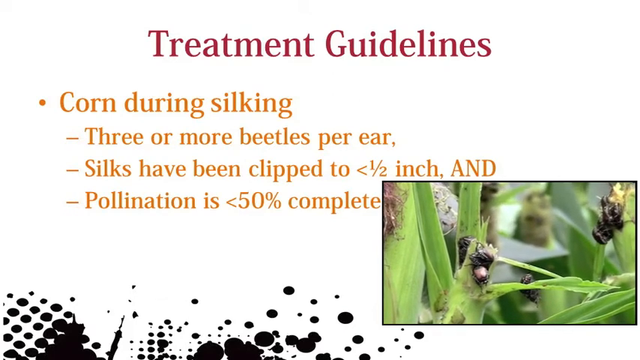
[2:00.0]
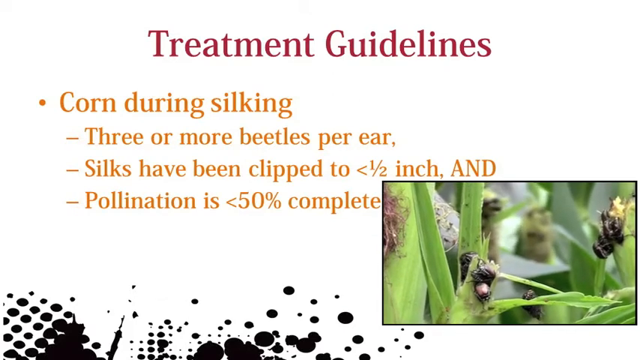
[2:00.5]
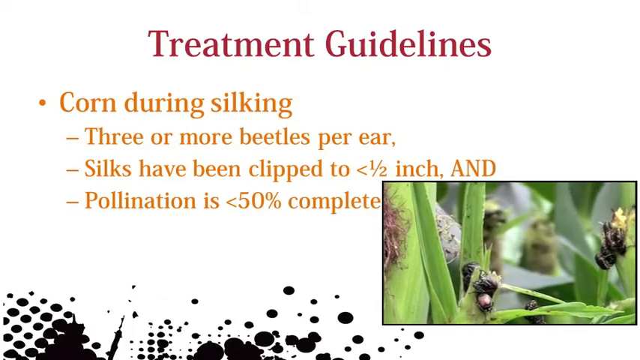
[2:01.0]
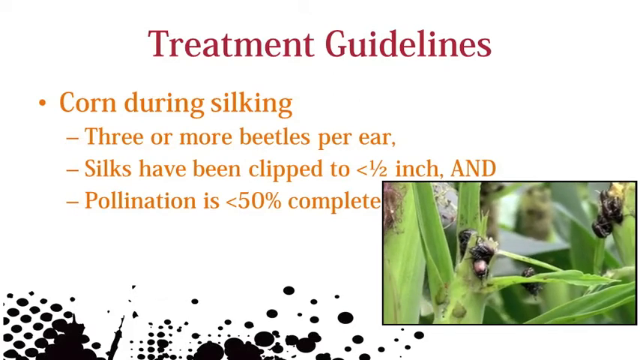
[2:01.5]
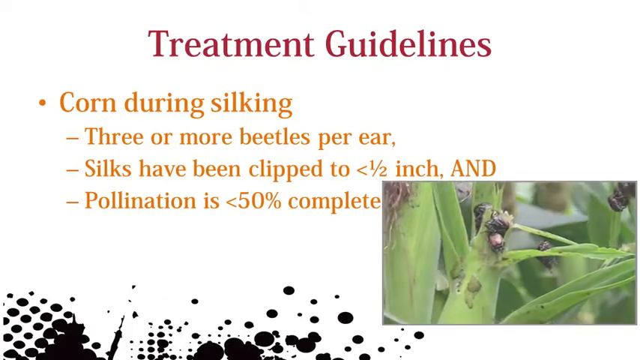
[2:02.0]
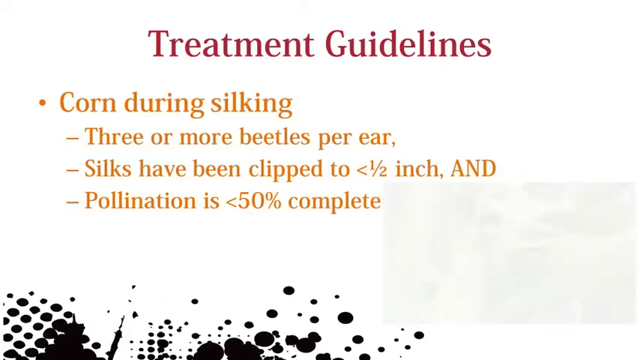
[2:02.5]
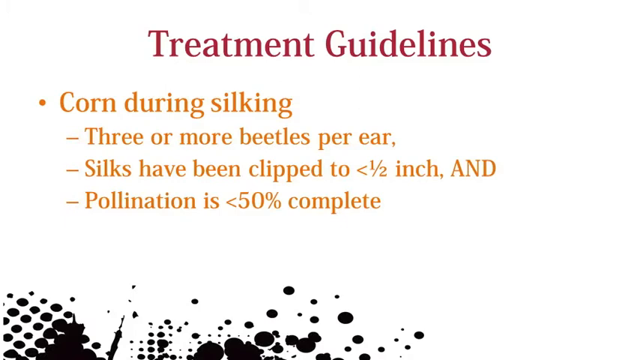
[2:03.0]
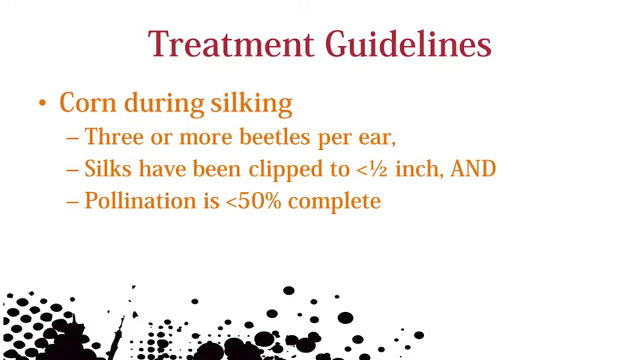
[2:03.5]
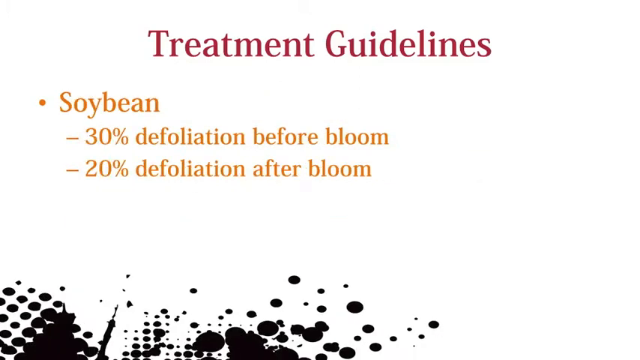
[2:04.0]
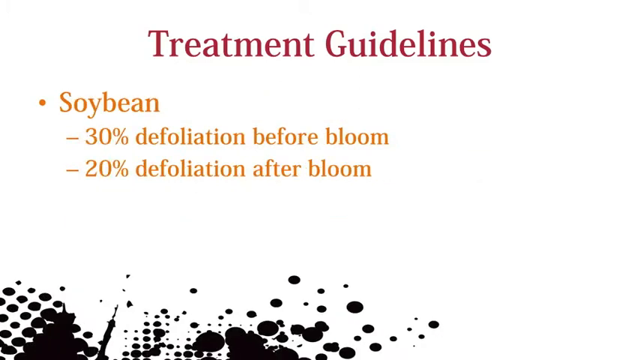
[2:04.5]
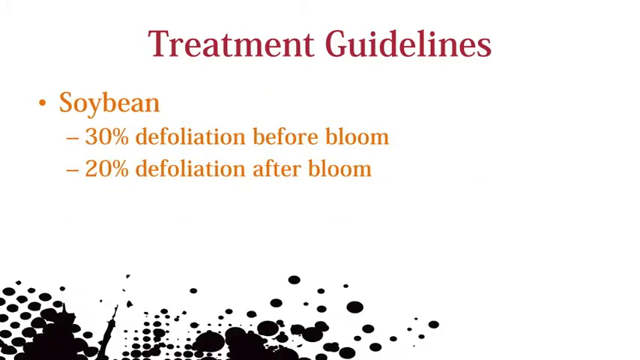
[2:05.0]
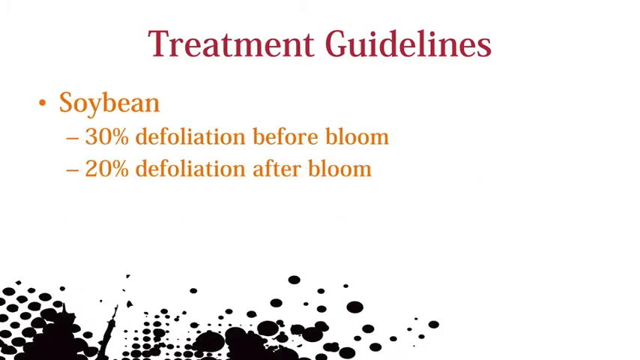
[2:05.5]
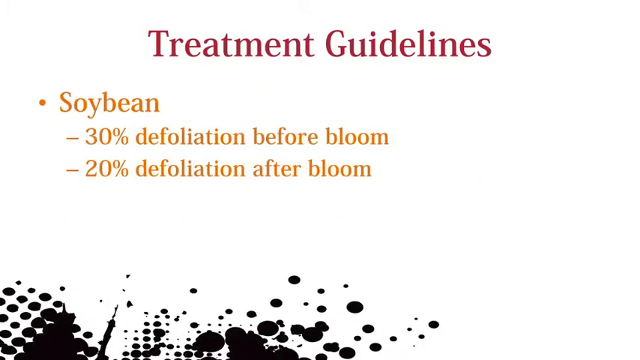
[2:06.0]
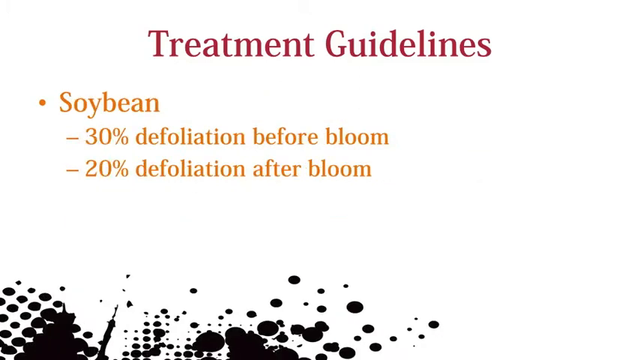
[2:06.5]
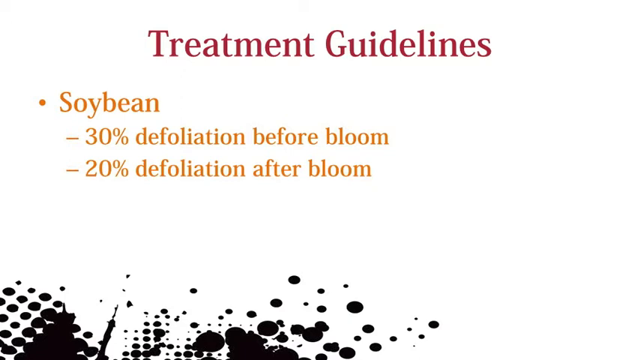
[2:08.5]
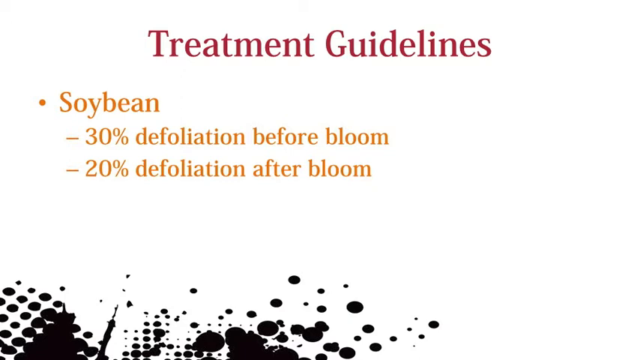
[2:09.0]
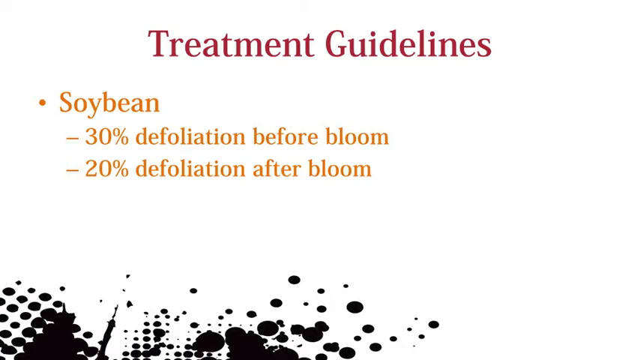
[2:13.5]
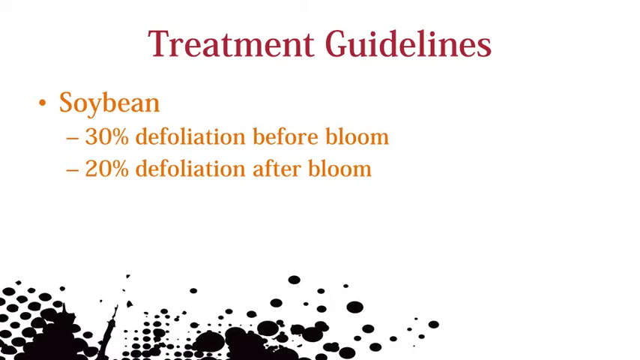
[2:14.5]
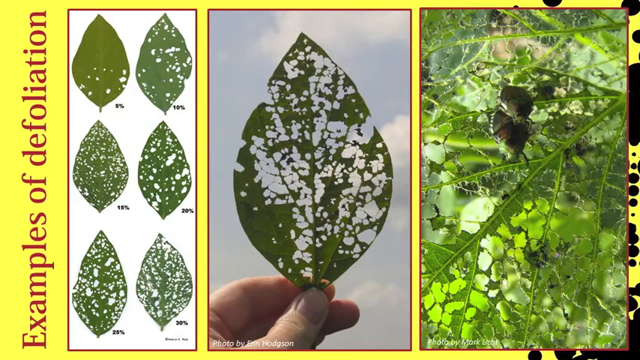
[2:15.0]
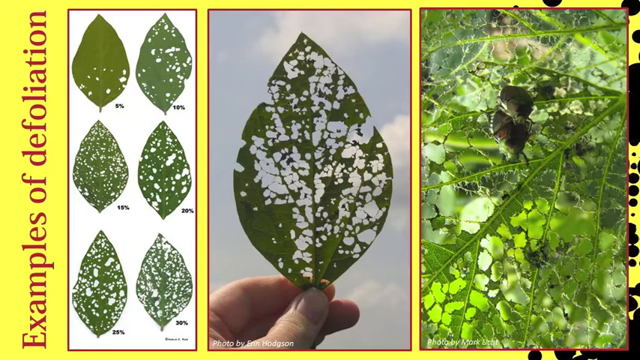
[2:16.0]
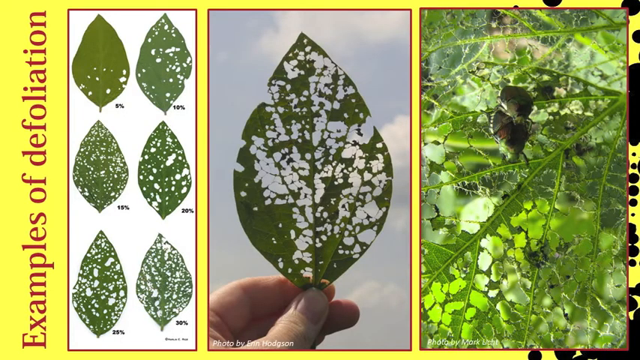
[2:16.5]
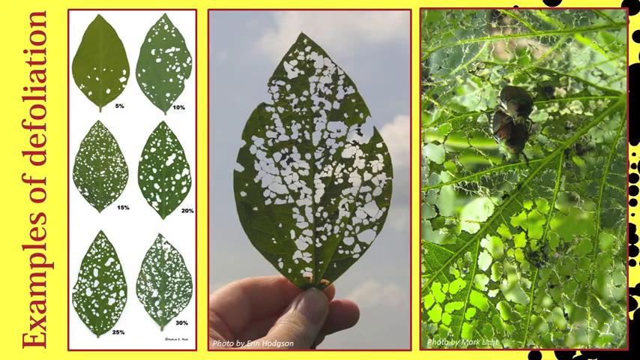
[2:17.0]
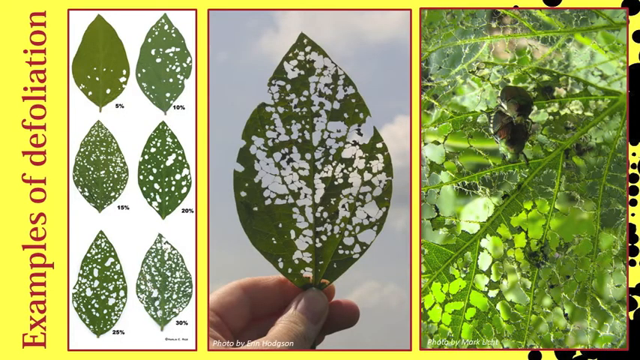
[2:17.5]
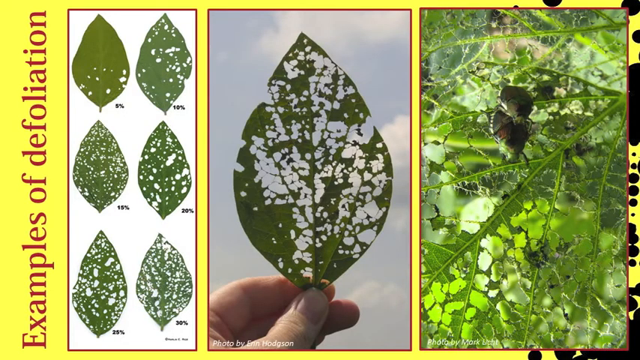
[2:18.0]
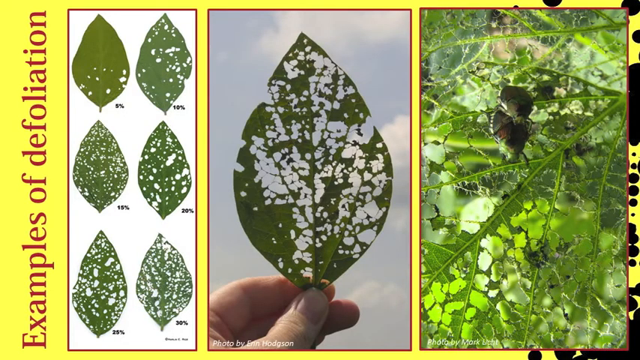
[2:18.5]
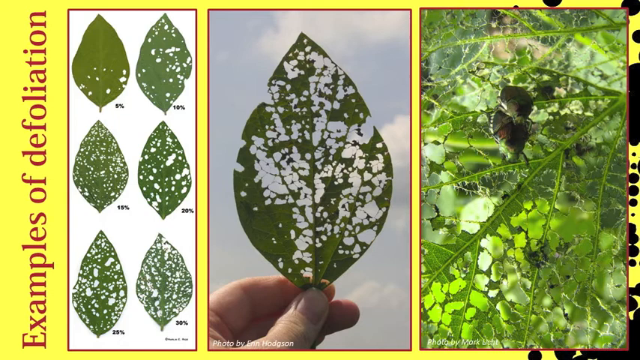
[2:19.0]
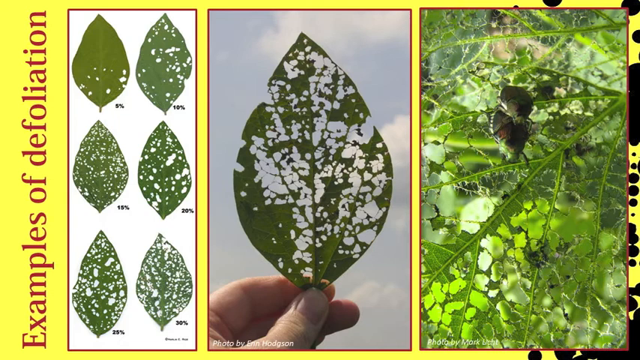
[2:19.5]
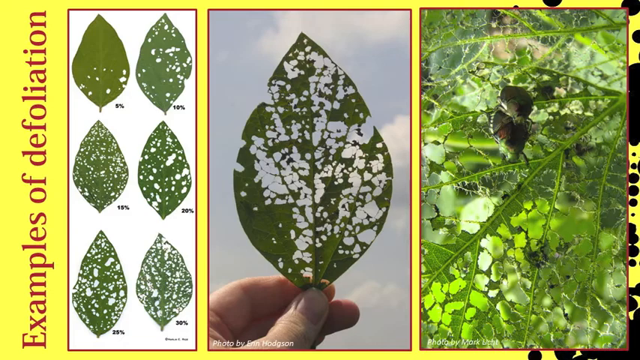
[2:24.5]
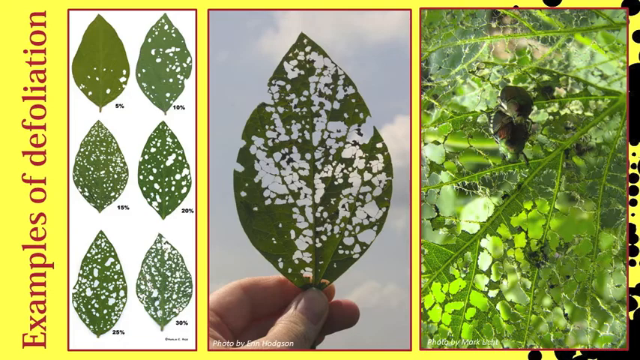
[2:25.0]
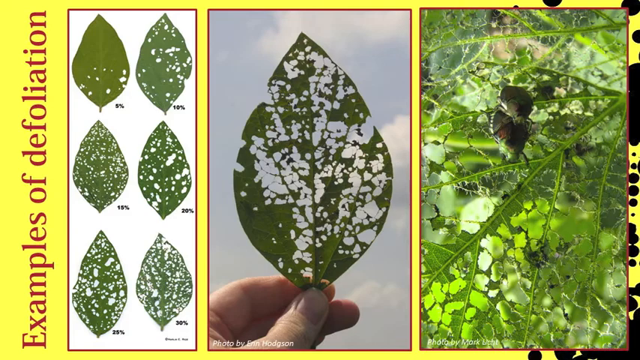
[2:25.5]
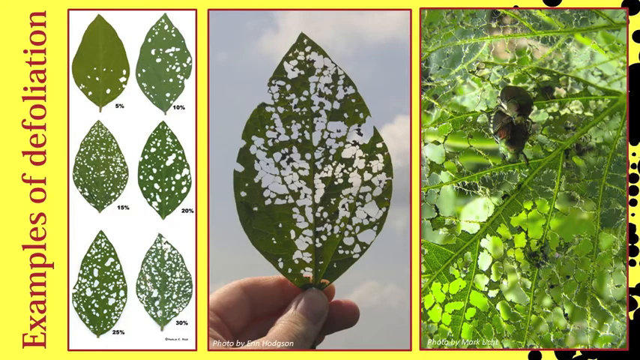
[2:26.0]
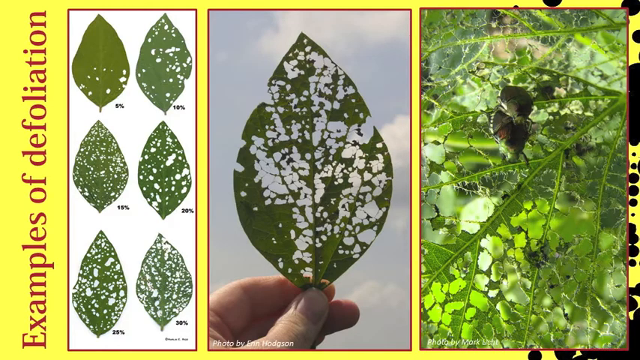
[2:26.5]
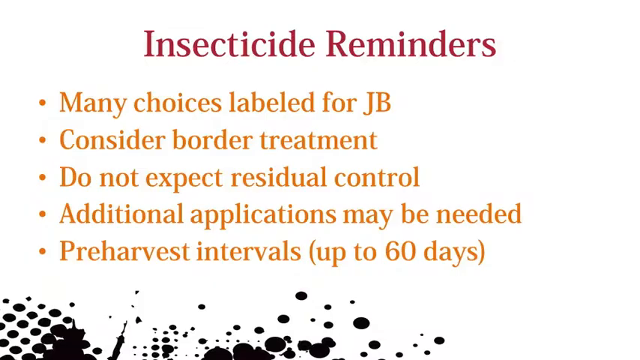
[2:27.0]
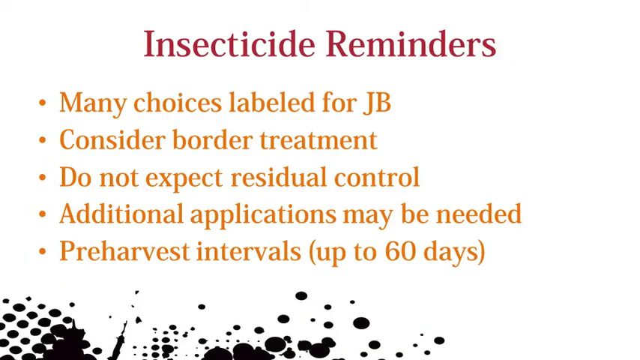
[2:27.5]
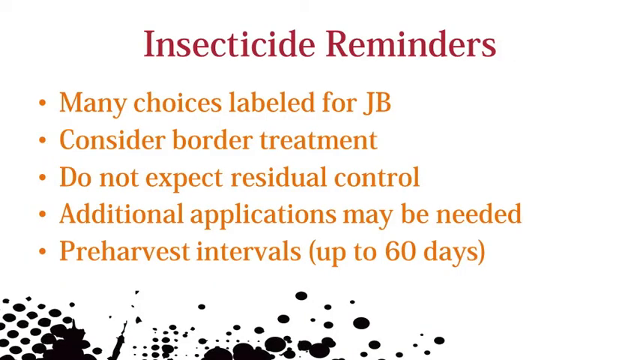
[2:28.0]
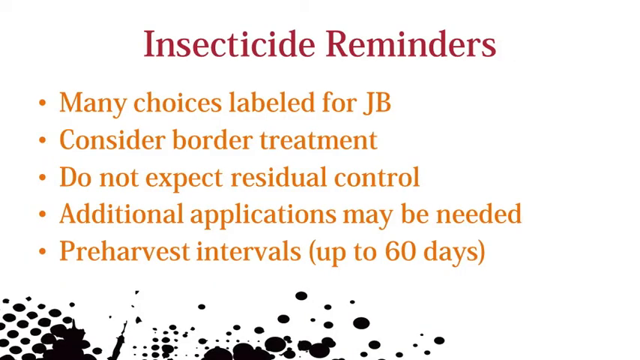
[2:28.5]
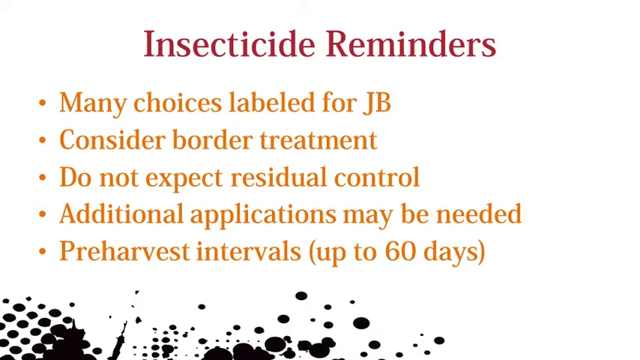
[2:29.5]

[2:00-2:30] A slide pops up with "treatment guidelines" in red at the top. Below, text about corn in orange on a white background includes "silks have been clipped to half inch and pollination is 50 percent complete." At the bottom right is another picture of the beetles eating at green plants, which looks to be a video documenting the beetles eating. The video then cuts to another "treatment guidelines" page in red, with text below about soybean reading "30 percent defoliation before bloom" and "20 percent defoliation after bloom," on a white background. It then cuts to a page with "examples of defoliation" on the left and three images on the right showing stages of a leaf, which look like they are dying and being eaten, with many parts bitten up by the beetles. The right picture shows a beetle eating the entirety of a leaf.